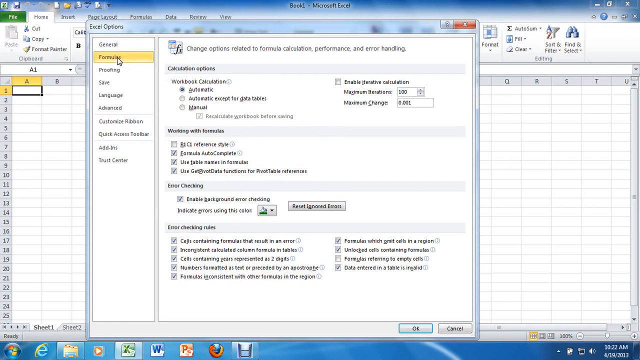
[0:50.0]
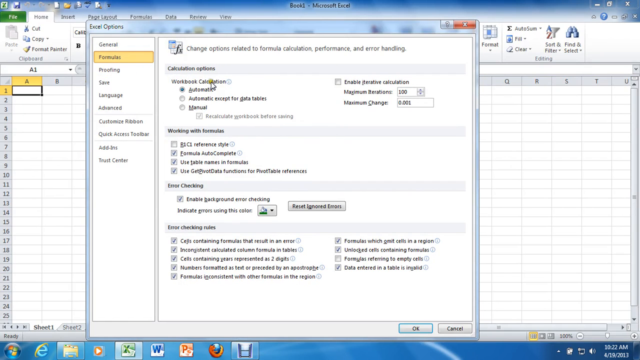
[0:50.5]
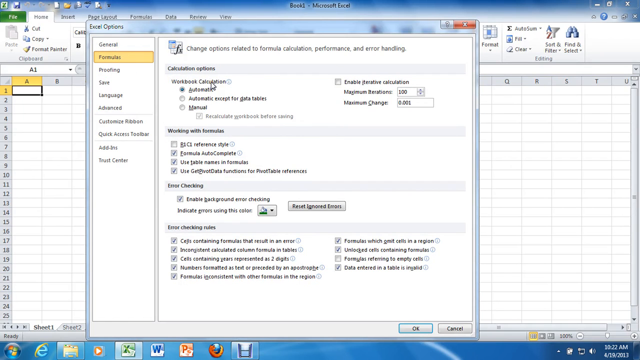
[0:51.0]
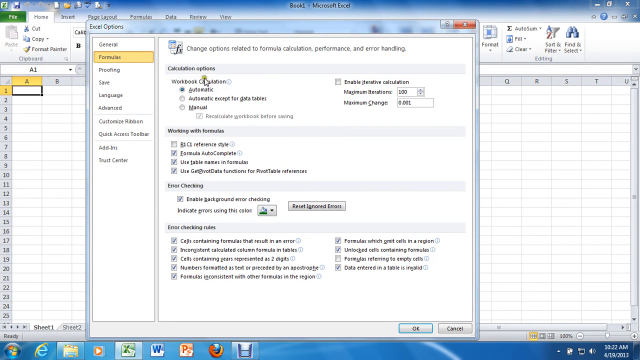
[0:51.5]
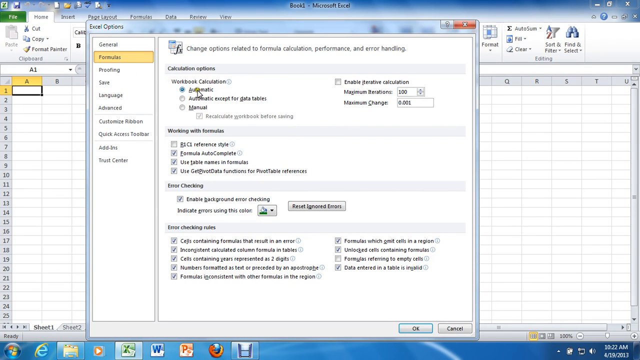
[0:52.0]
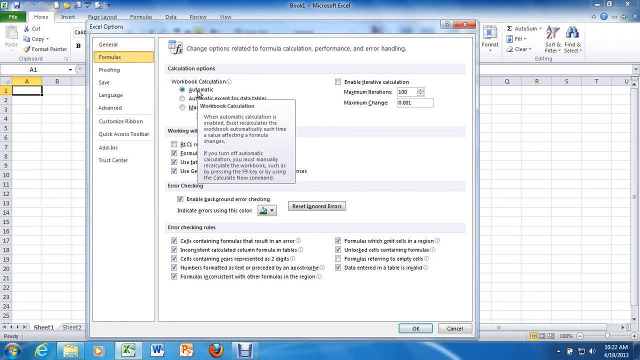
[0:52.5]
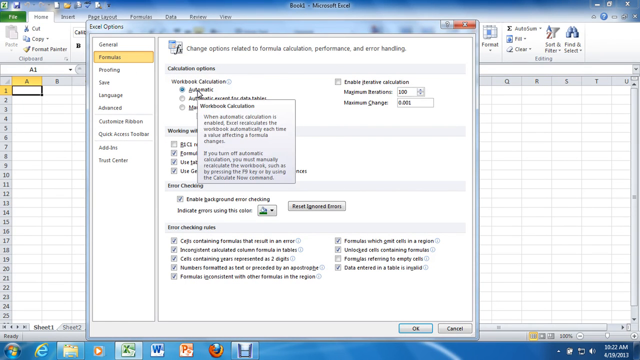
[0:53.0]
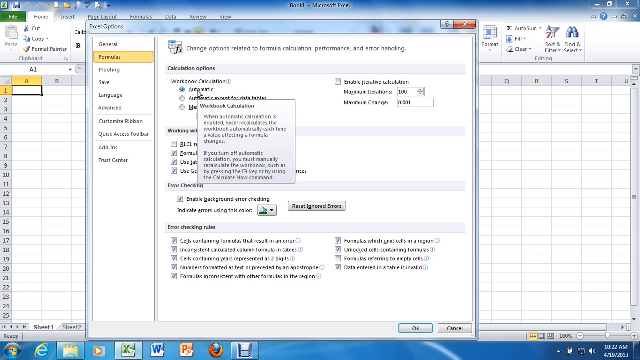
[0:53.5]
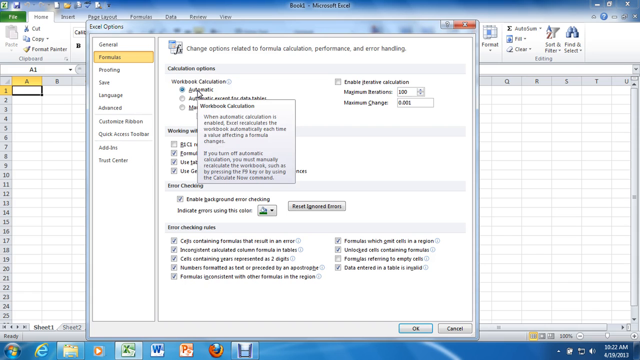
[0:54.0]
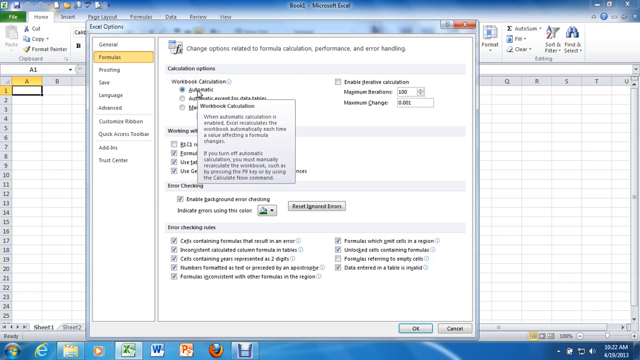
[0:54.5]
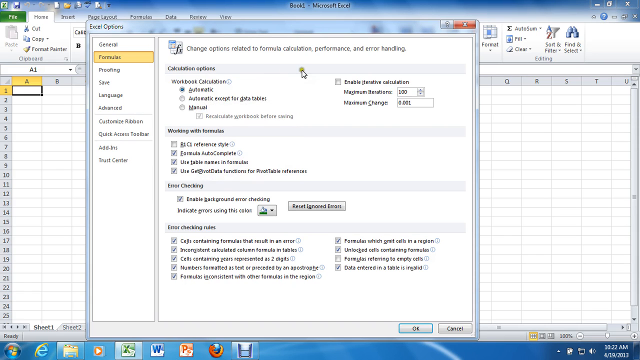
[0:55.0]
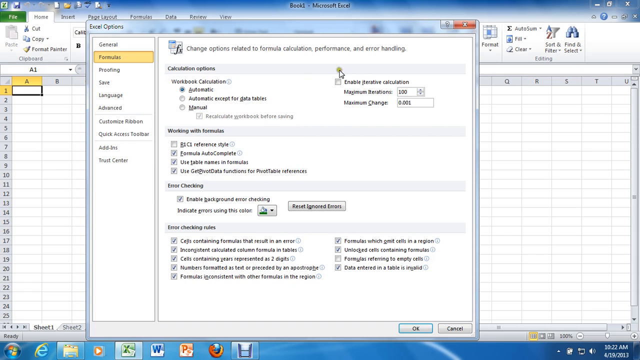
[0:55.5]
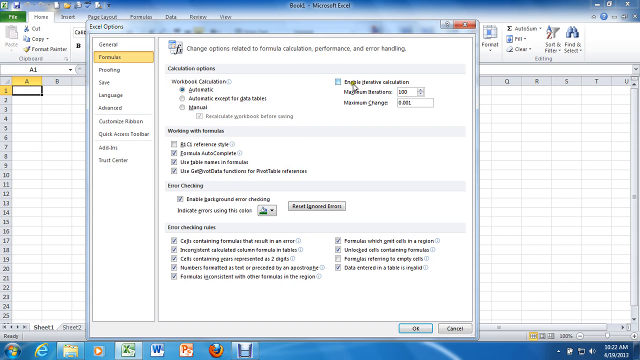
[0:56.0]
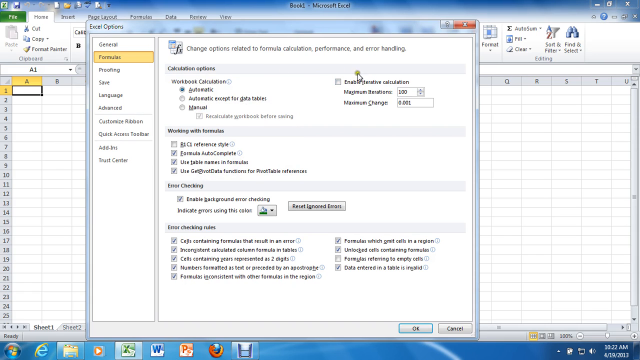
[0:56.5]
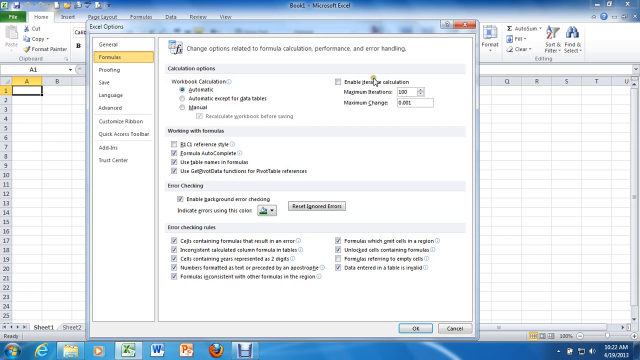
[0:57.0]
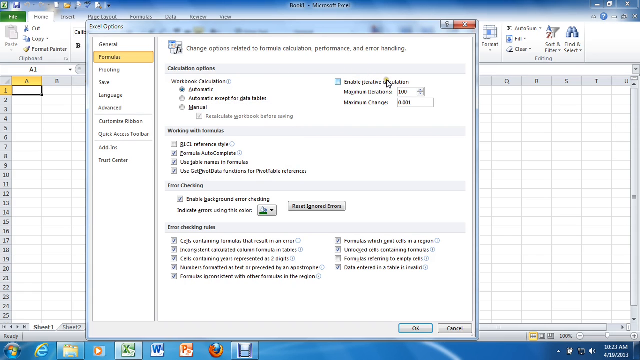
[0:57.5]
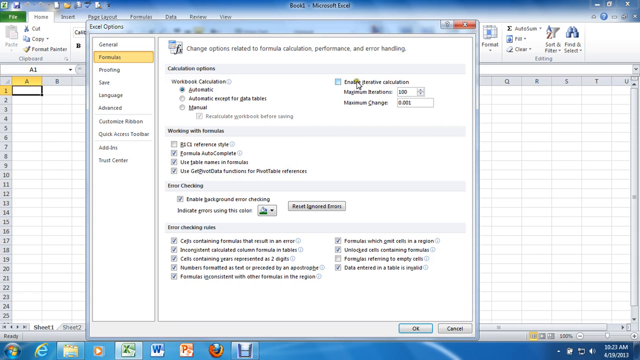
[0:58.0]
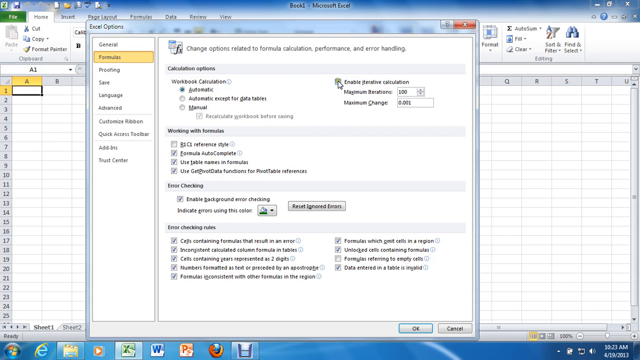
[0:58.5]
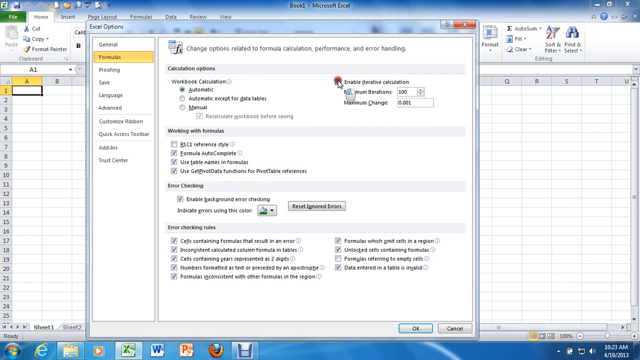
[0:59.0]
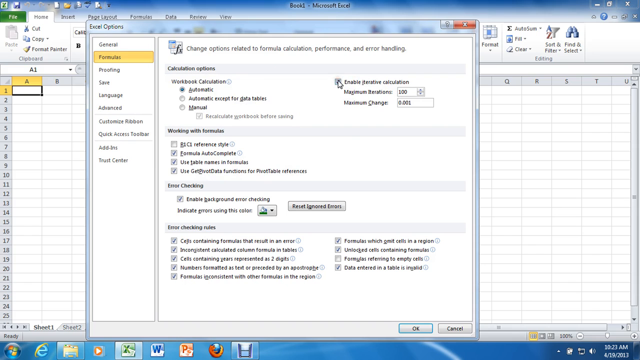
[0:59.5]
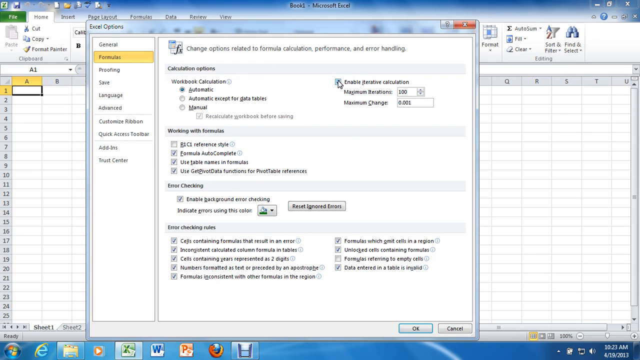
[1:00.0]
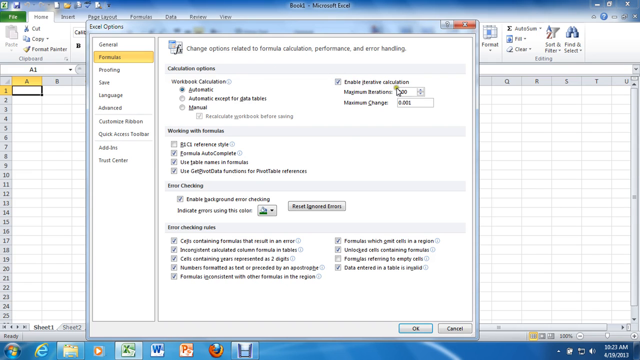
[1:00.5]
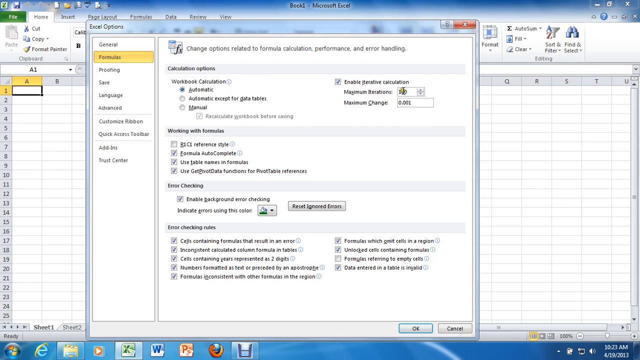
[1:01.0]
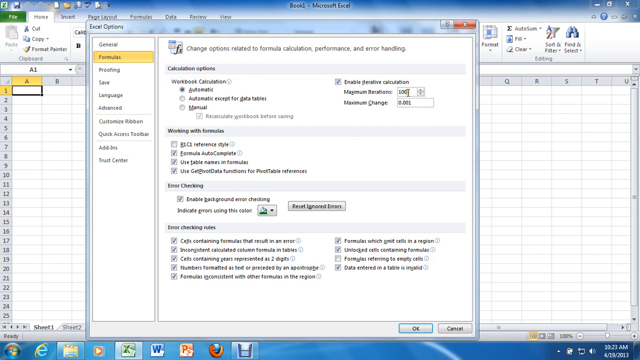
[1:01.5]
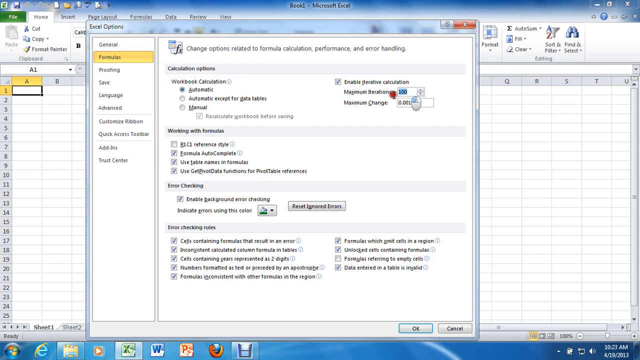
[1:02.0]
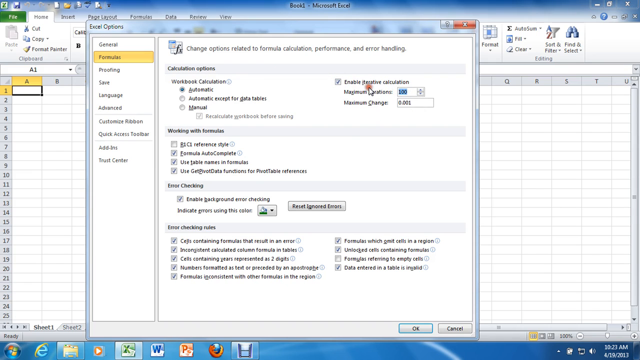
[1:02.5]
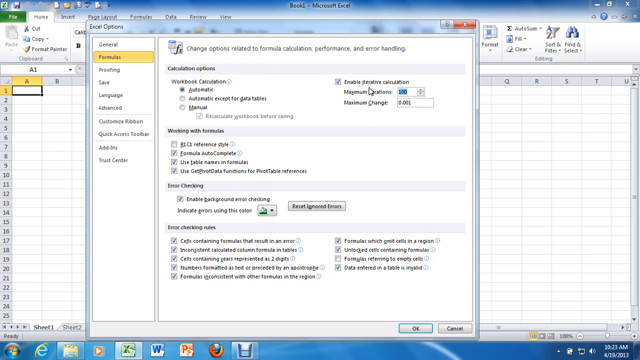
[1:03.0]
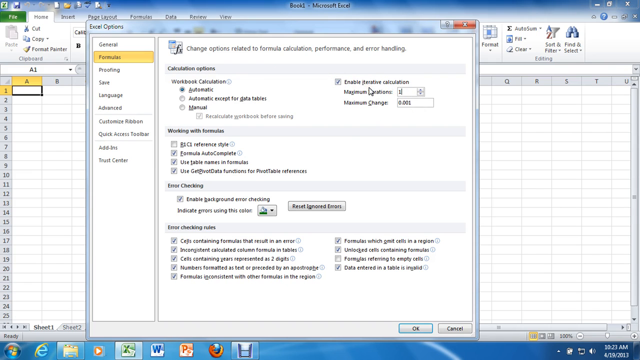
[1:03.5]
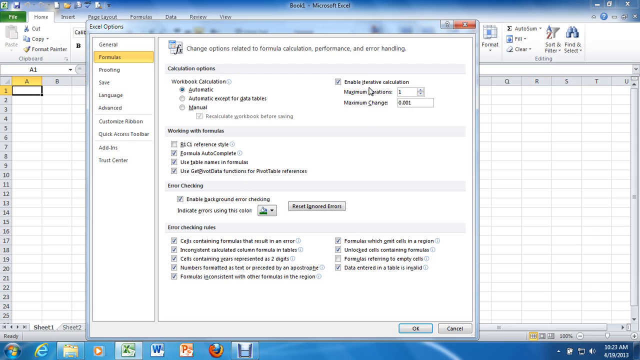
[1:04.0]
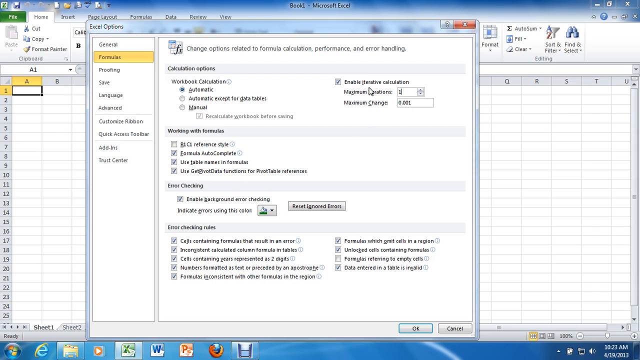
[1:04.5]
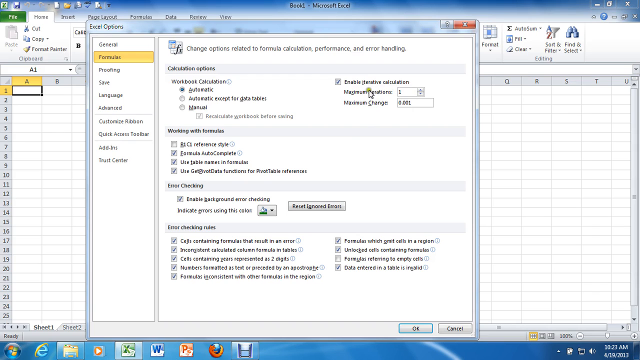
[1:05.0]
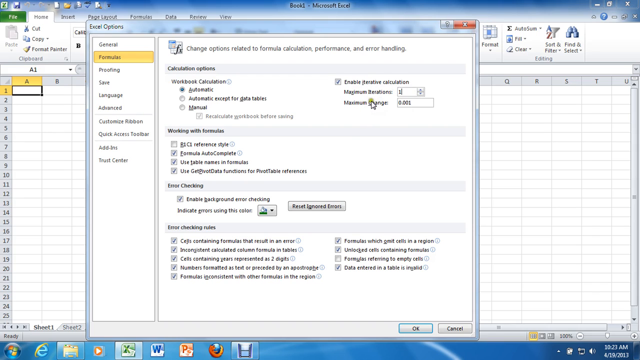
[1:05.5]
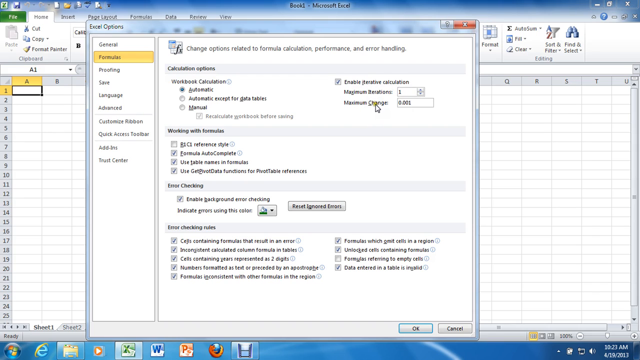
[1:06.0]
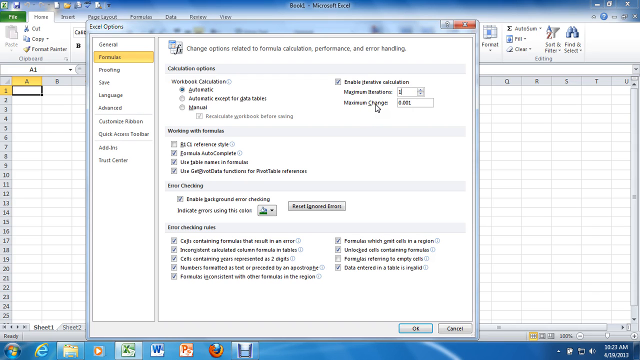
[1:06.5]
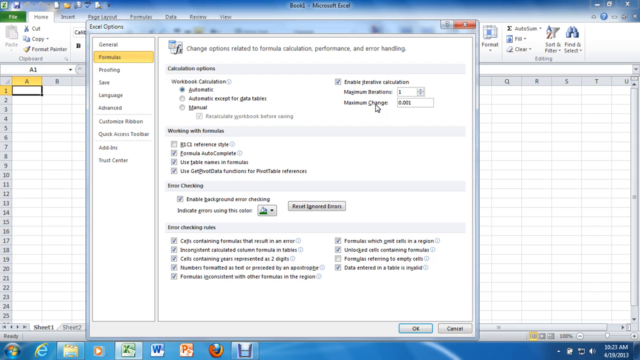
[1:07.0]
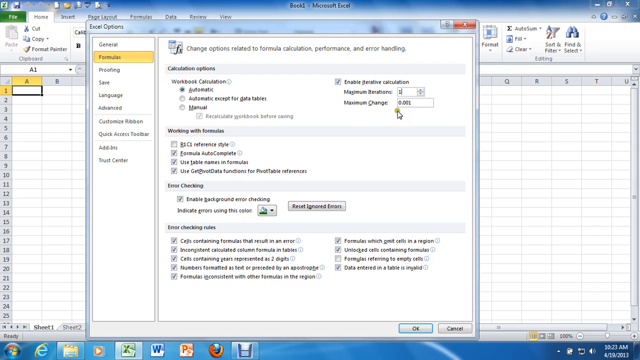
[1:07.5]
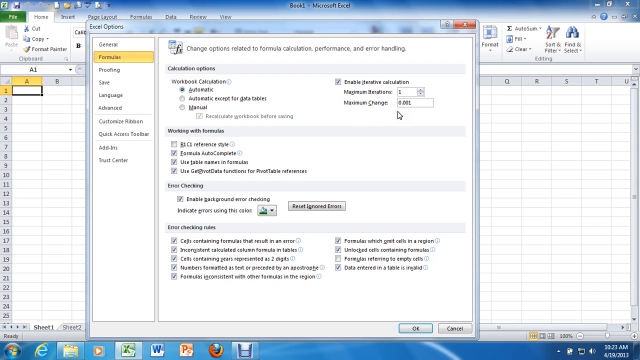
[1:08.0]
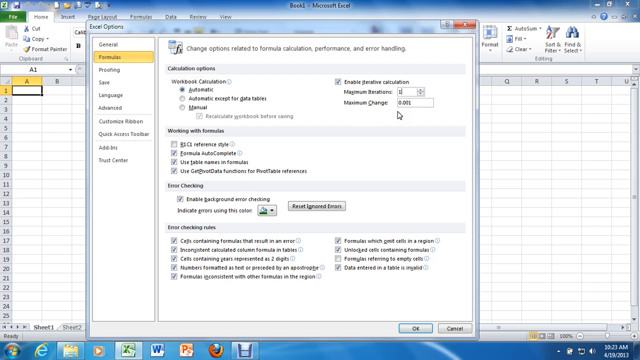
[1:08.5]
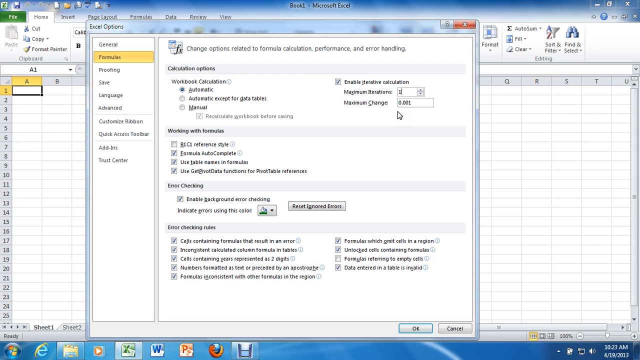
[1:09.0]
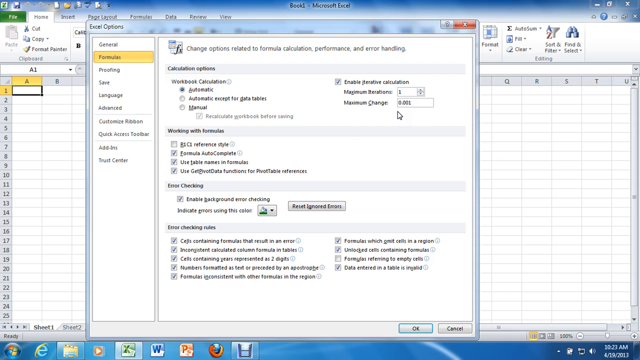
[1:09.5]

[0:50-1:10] The File page opened by clicking the green button is on screen, with text reading "calculation options" and the chart in the background. The writing is very small. He checks maximum change and another maximum setting, changing them to 100 and 1,000. Three different pages are open on top of the chart, with nothing in any of them. He clicks a gold icon that says "formulas", then it clicks back. He opens another page, too small to read, and enables calculations. The view then returns to the big empty file page. He moves the mouse around and selects the green File button, which opens the page, and then he opens another page on top of it.